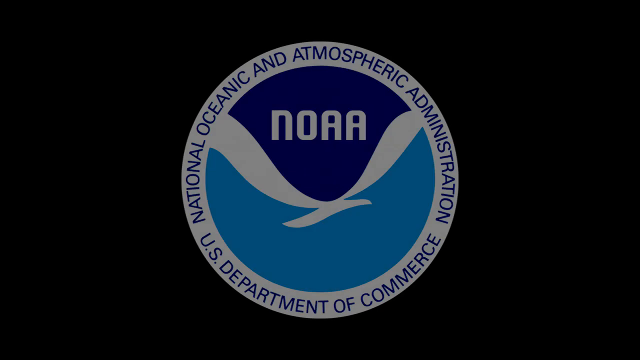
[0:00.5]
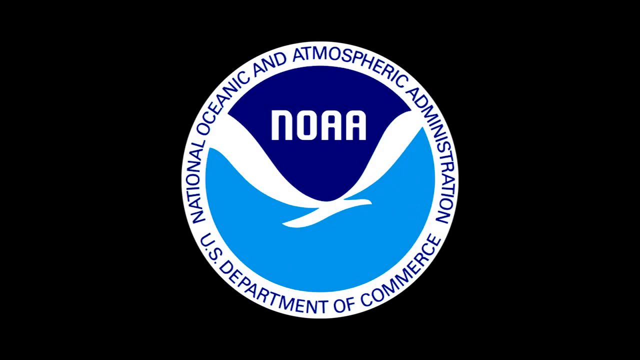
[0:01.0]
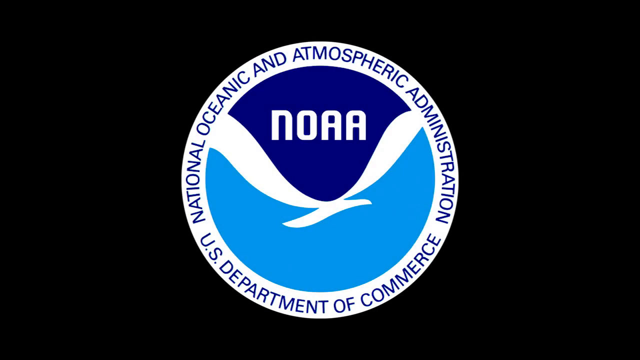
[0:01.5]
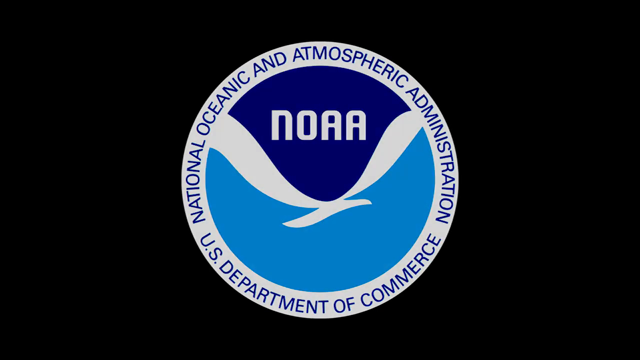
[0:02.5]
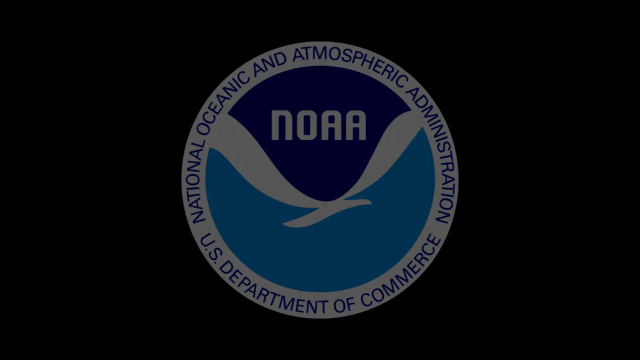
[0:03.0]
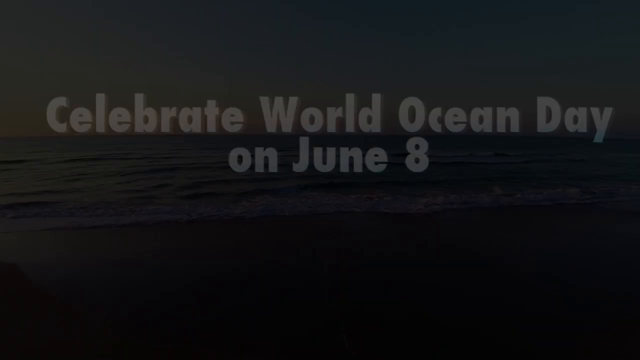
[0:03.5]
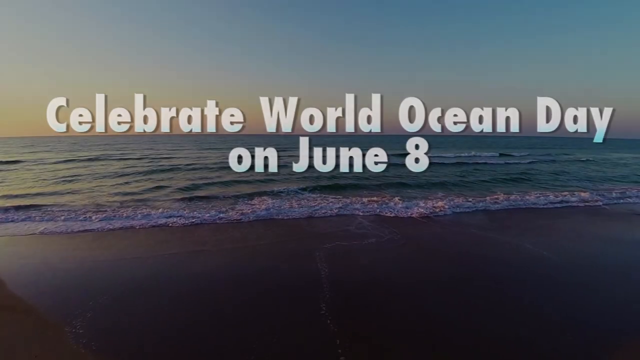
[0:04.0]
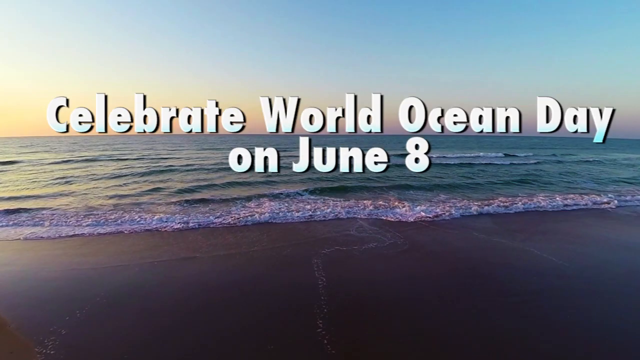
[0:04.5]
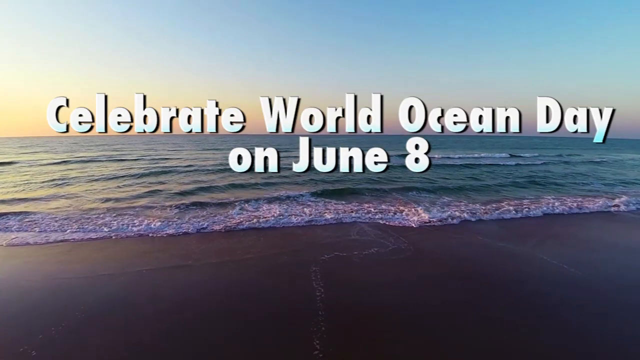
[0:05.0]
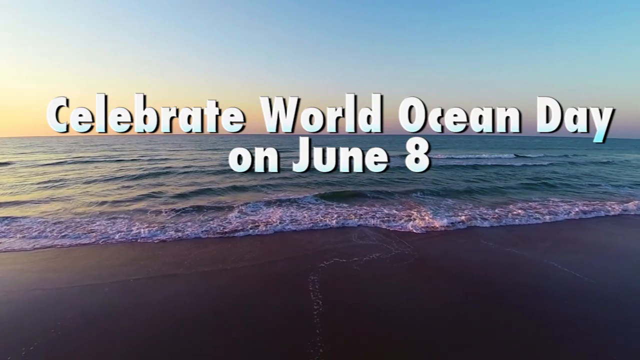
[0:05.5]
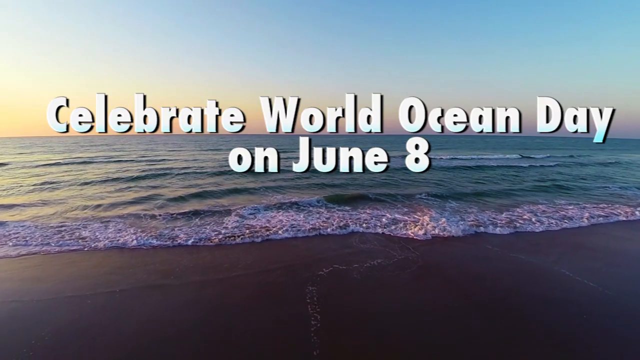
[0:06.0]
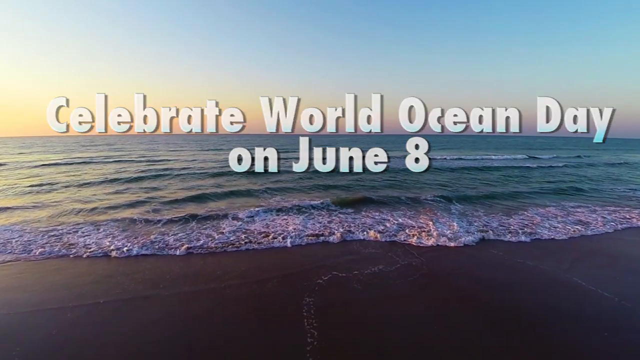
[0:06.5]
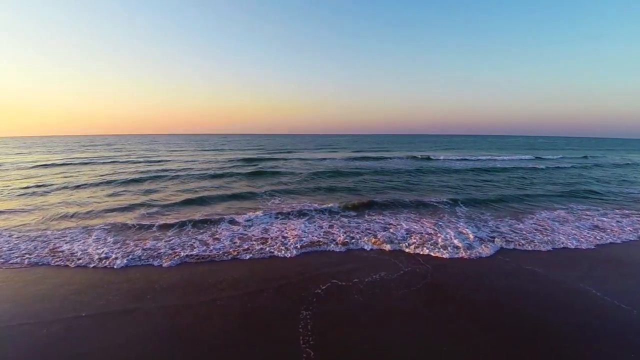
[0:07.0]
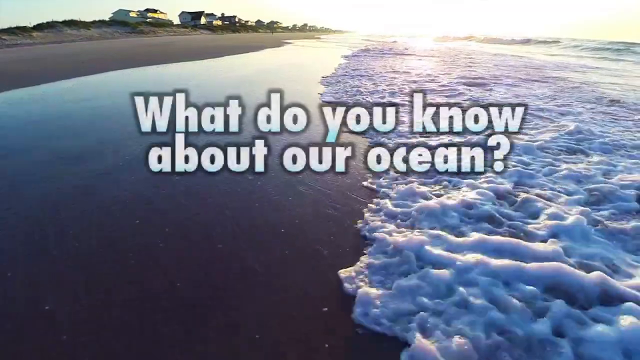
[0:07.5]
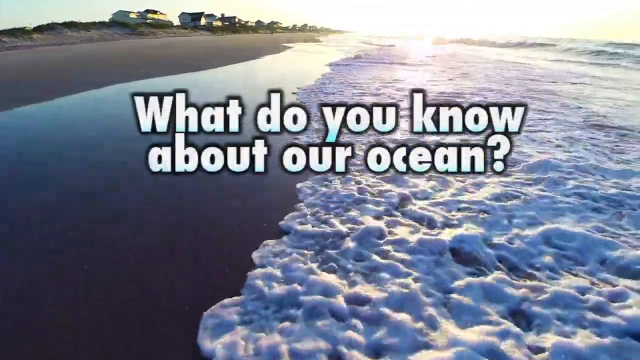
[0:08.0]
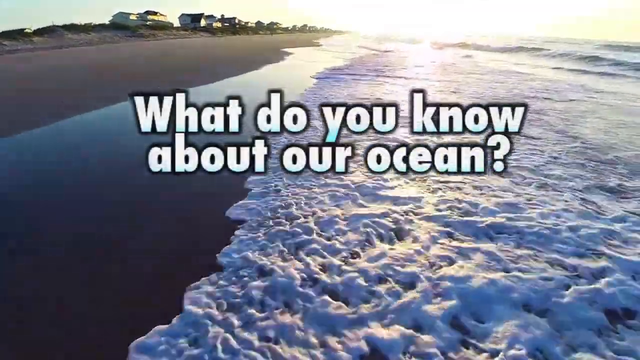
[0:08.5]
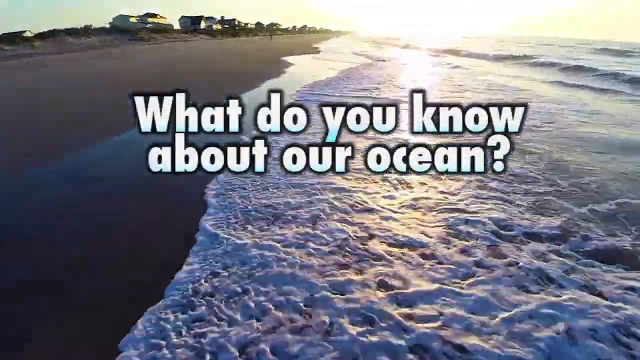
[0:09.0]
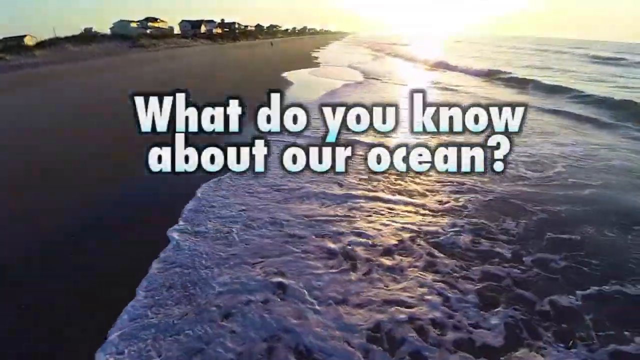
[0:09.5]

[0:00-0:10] The video opens with the name "National Oceanic and Atmospheric Administration, U.S. Department of Commerce" and a logo or crest with the letters NOAA and what looks like a bird inside it. Text reads "Celebrate World Ocean Day on June 8th" and "What do you know about our ocean?" Scenic views follow of waves moving in closer to shore, with a sunset or sunrise in the background.